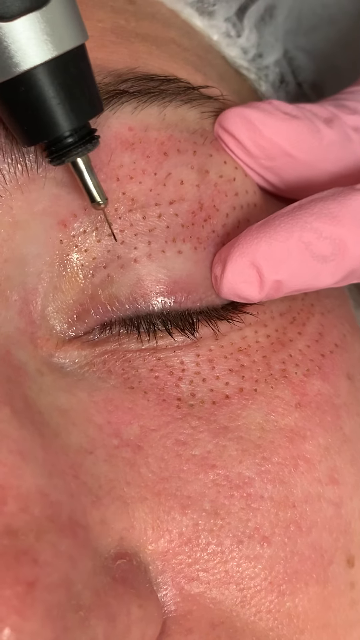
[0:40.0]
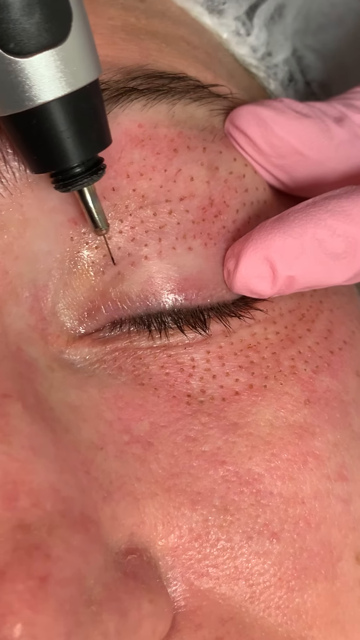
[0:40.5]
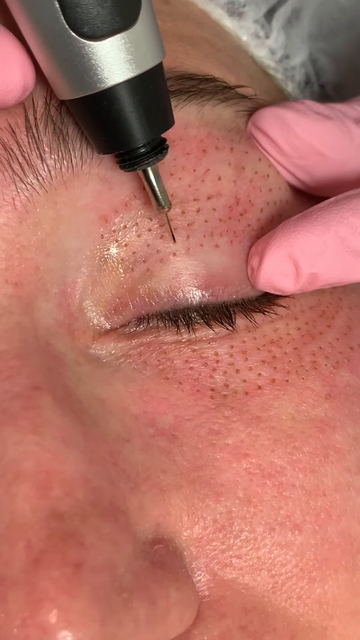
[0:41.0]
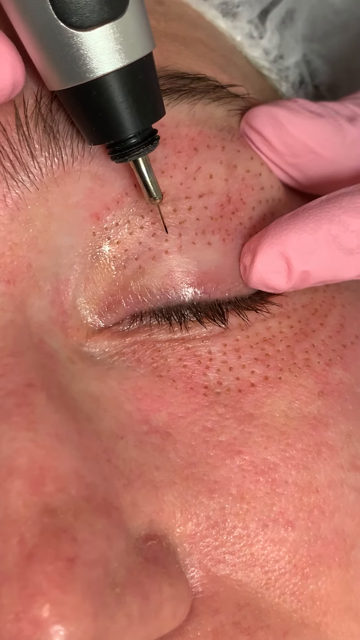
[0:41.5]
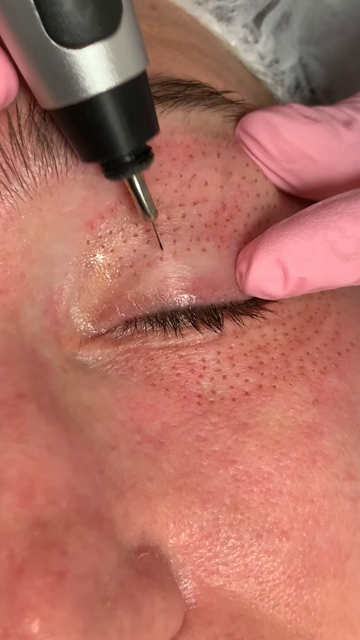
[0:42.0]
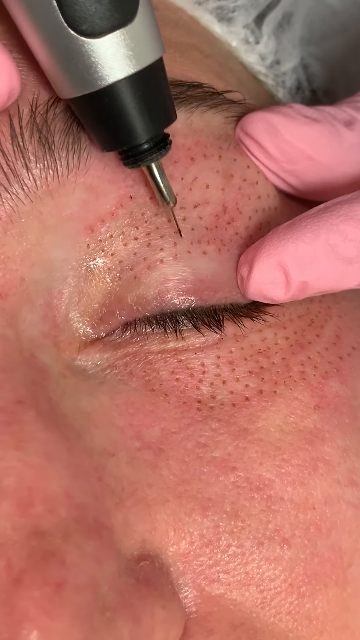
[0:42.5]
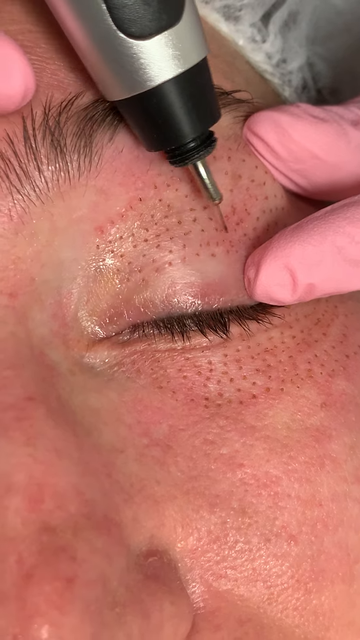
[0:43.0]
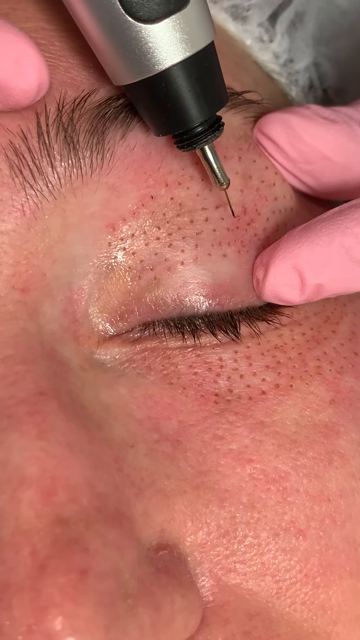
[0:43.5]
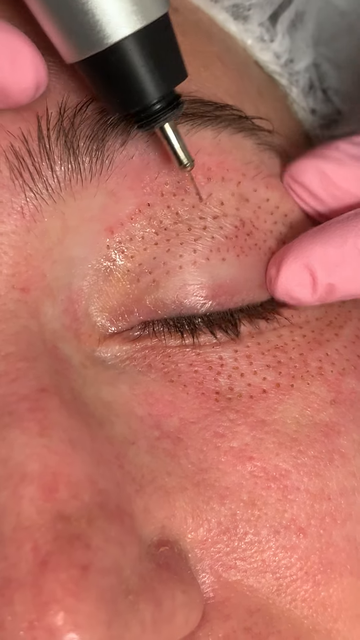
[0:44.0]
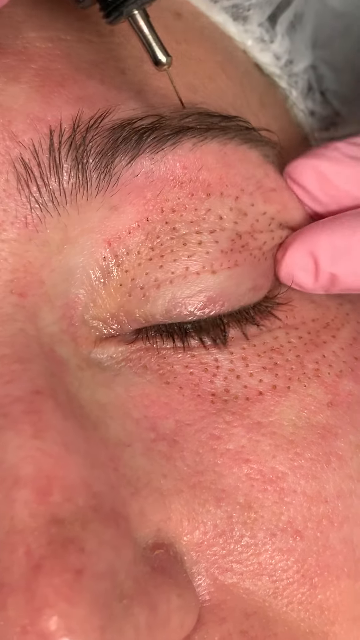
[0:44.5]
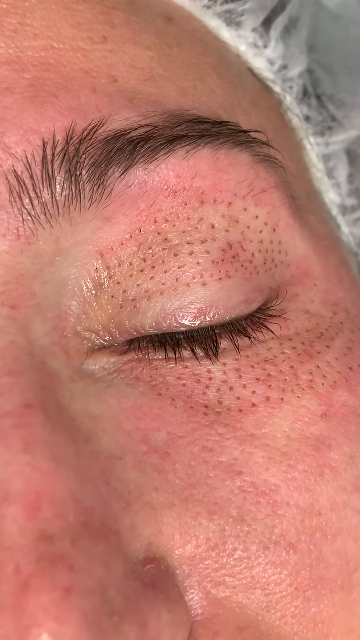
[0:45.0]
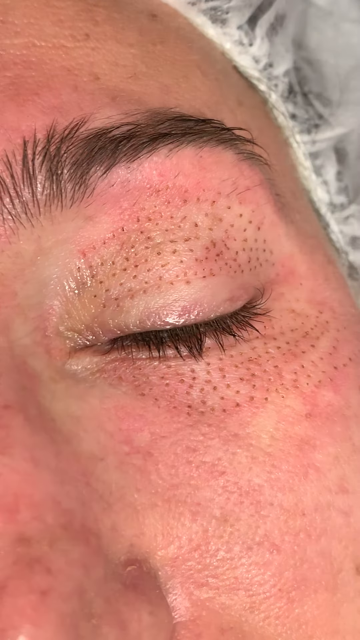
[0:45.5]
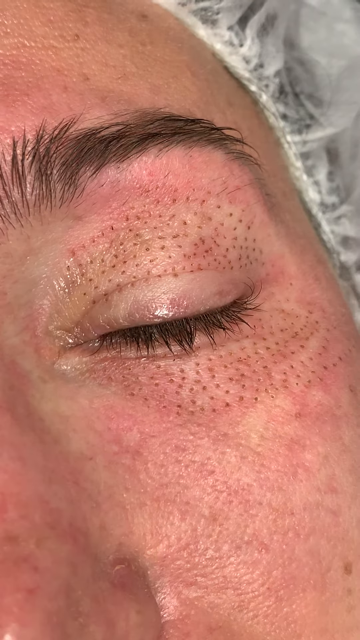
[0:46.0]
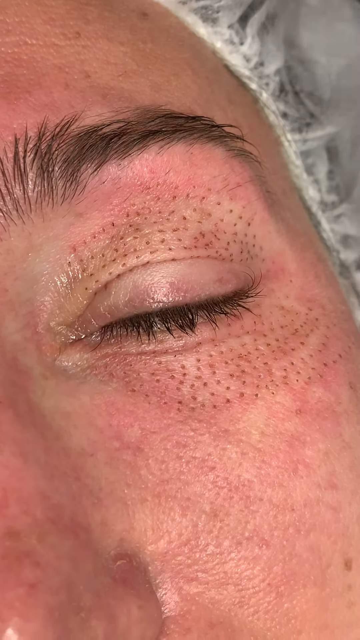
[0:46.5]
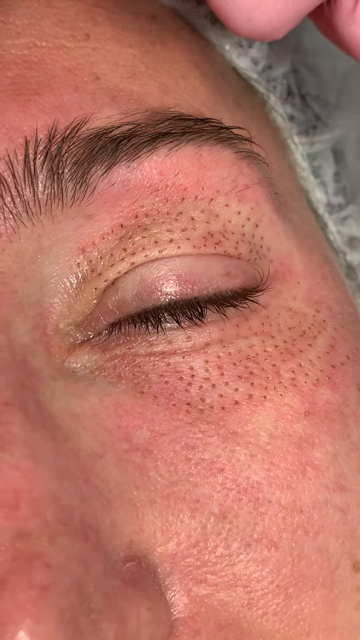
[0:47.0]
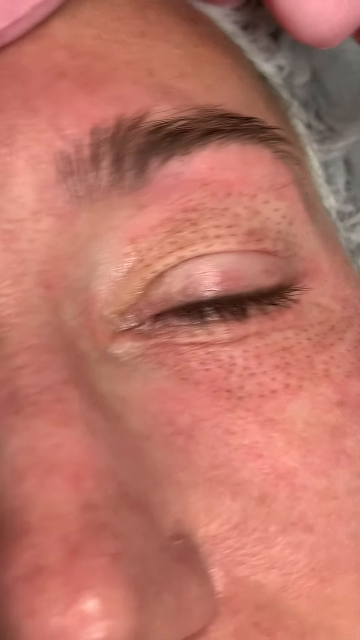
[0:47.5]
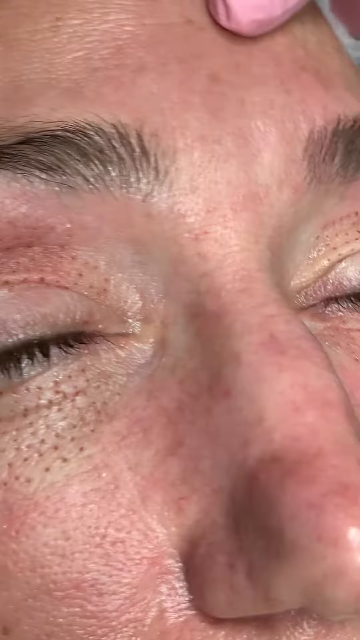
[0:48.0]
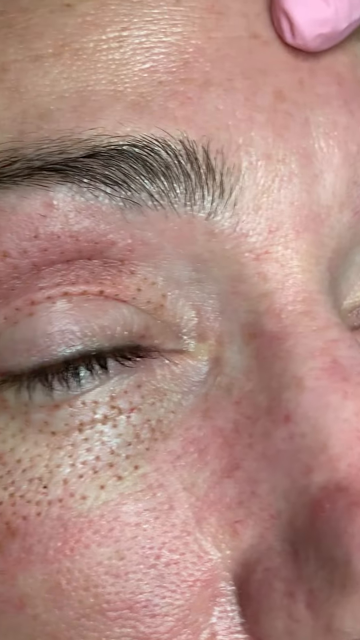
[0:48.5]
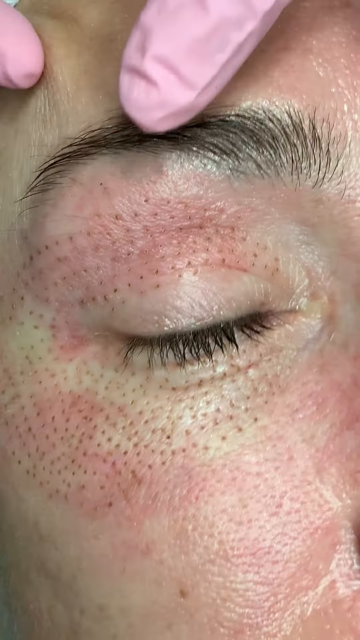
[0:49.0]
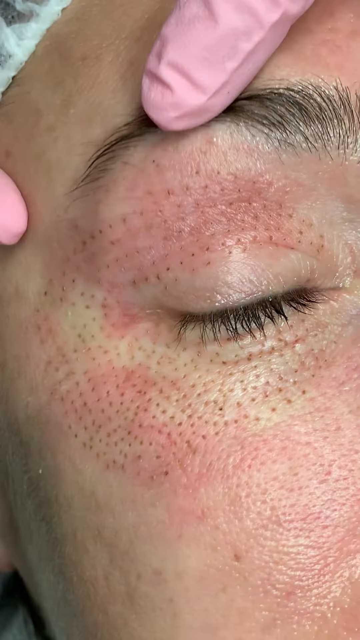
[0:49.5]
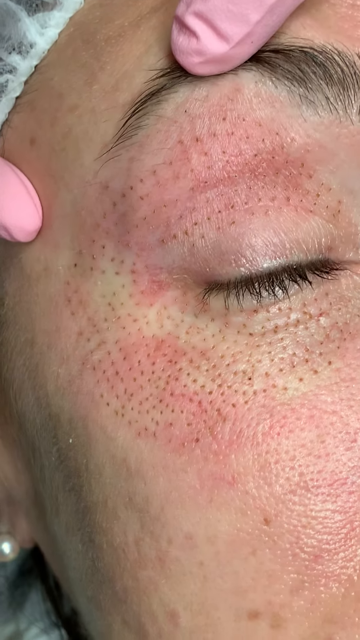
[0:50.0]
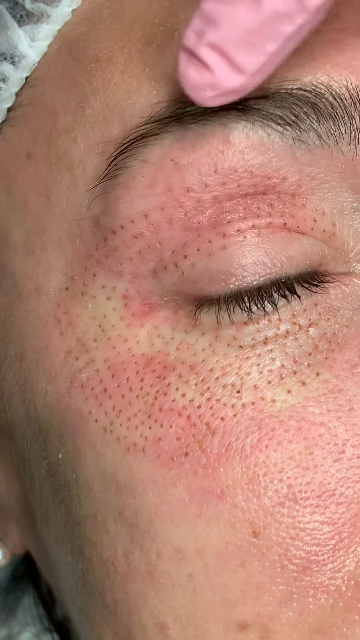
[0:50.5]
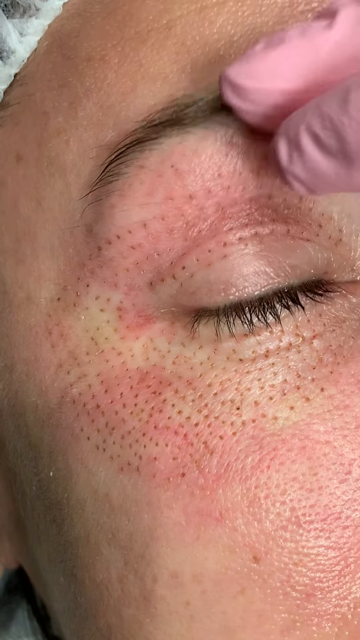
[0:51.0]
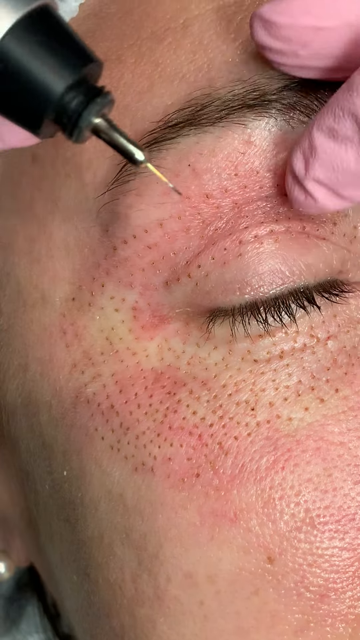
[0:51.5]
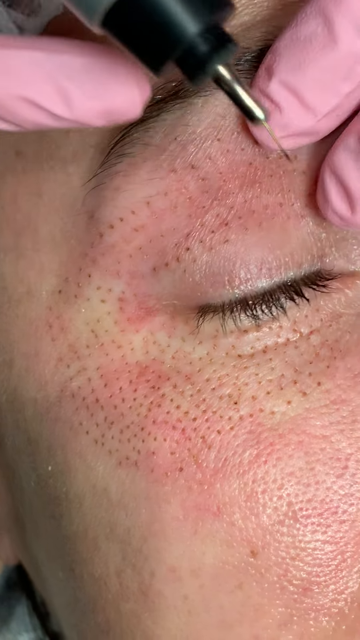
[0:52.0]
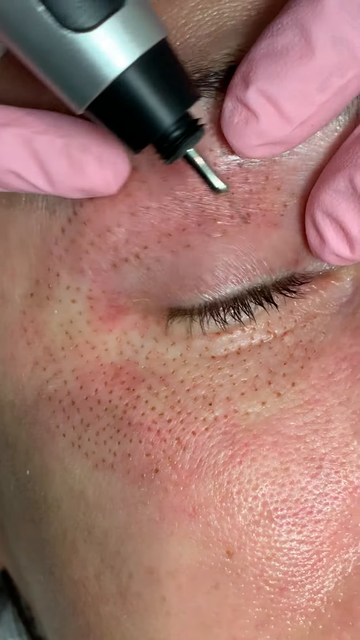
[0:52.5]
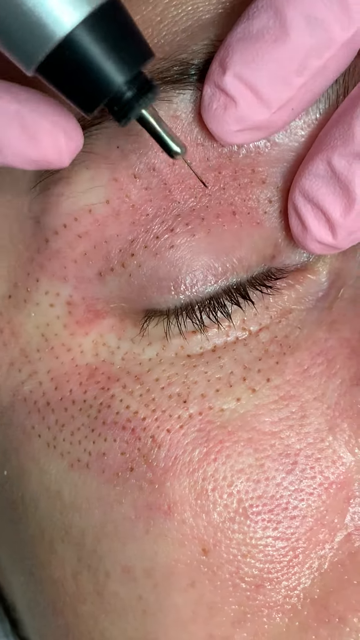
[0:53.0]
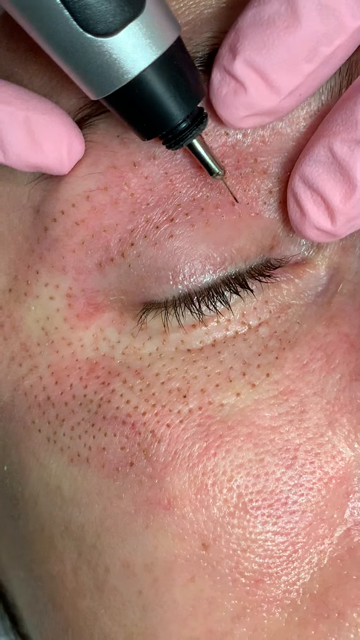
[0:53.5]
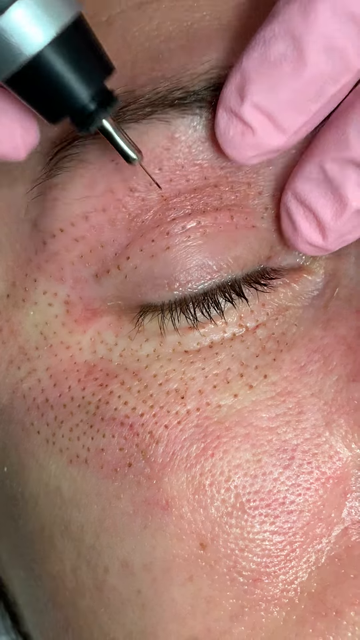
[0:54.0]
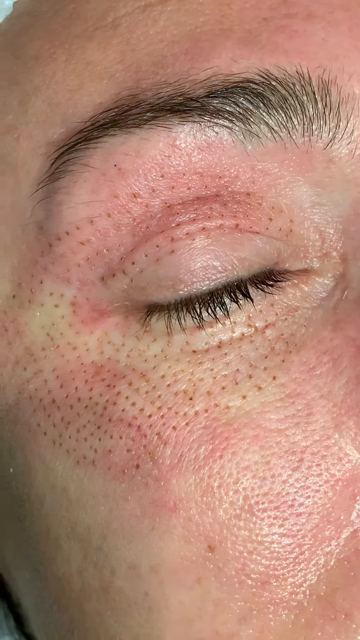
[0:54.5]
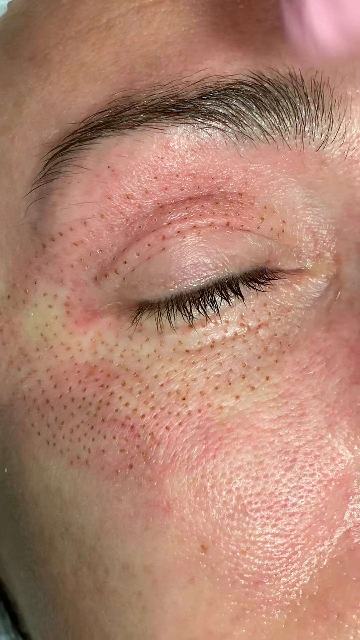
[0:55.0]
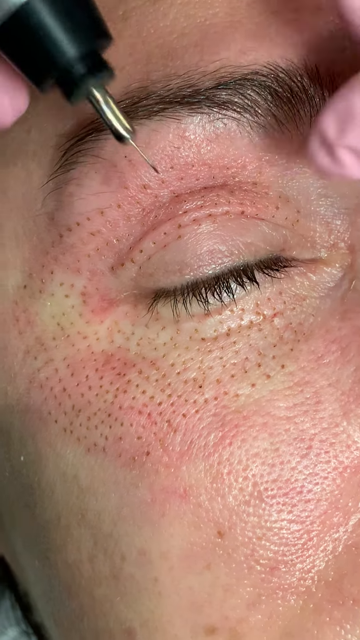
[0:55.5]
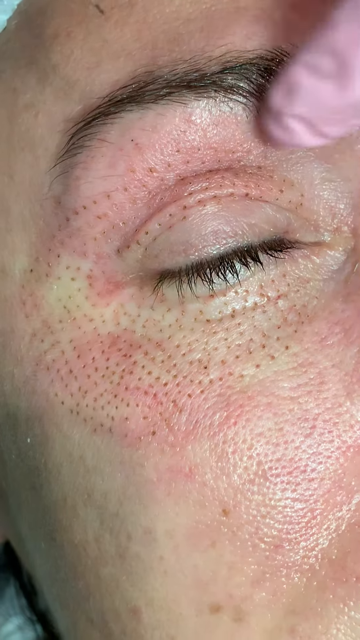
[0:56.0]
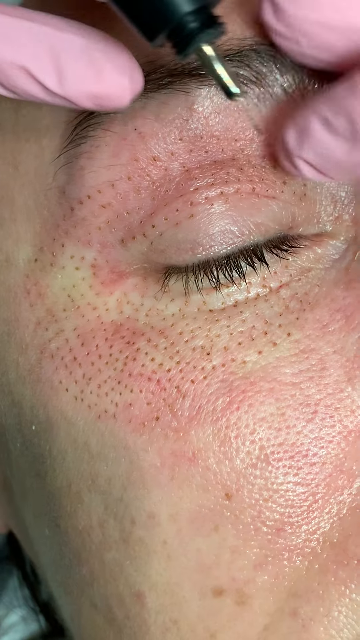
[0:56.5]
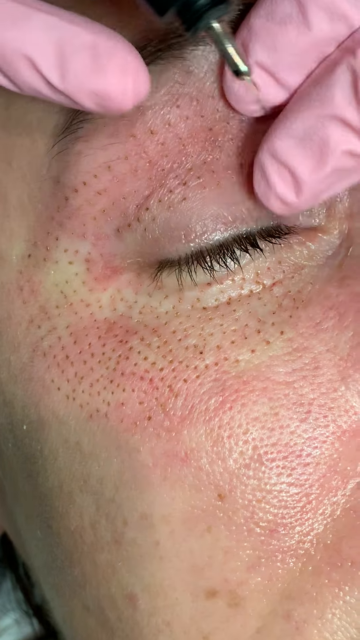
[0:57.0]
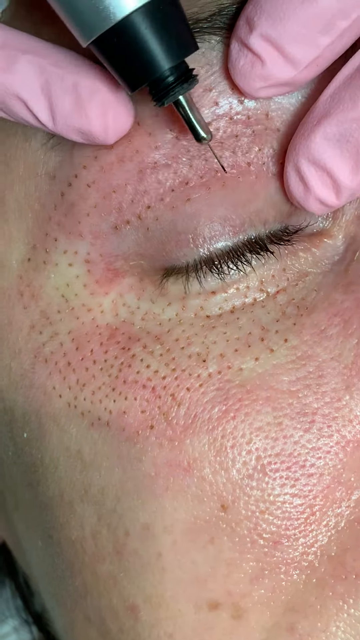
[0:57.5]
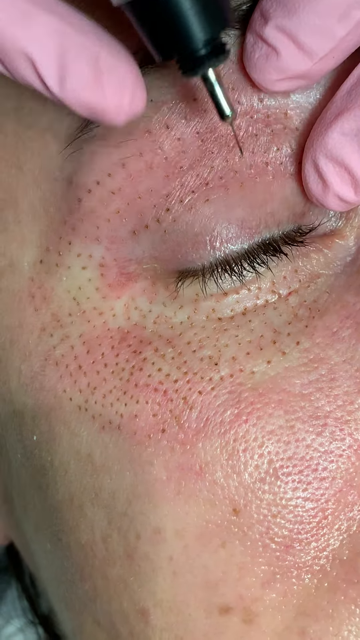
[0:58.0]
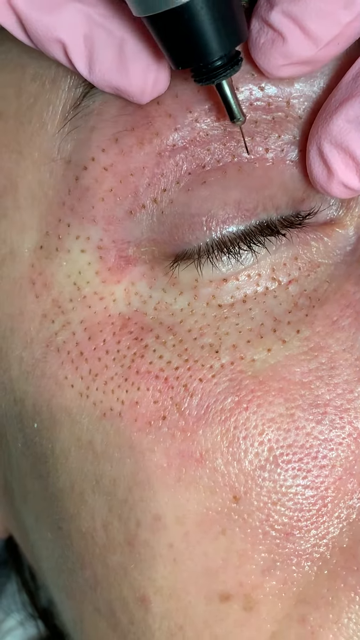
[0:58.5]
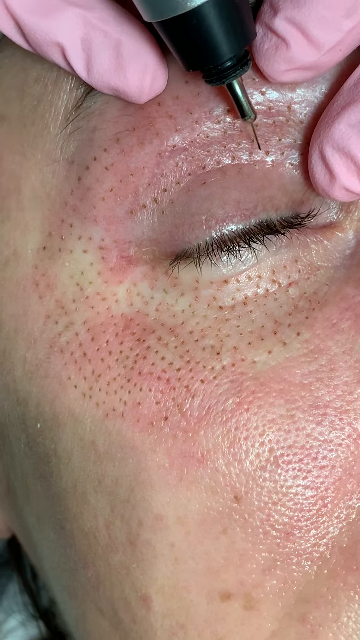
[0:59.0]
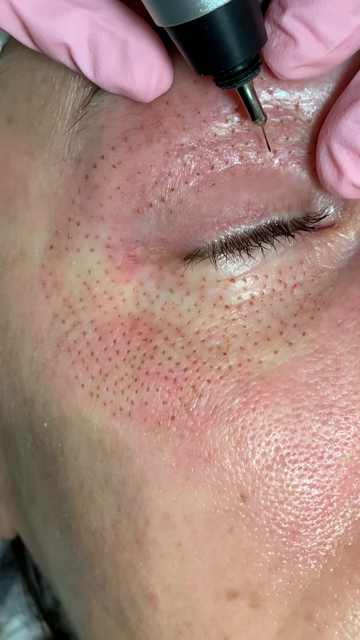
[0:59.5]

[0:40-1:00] The camera is very close to a woman's face, showing her closed left eye. Mostly her eye, the upper part of her cheek and her eyebrow are visible, and beyond that a bit of a surgical cap she is wearing. A right hand holds the eyelid tautly, and the left hand holds a surgical device with a silver barrel and a silver band just above a black tip, from which a metal needle pokes out. Around the eye, on both the lower and upper lids, there is a series of brown dots that look like freckles or tattoos. The person holding the surgical instrument points at several of the dots and moves the instrument around them as if to illustrate something. The video then moves to the woman's right eye, around which there is the same series of dots, which look like they have been applied by the metal instrument. The fingers of the pink lab gloves are visible moving around the eye, and the person moves the instrument up and down as if to illustrate something about the dots.